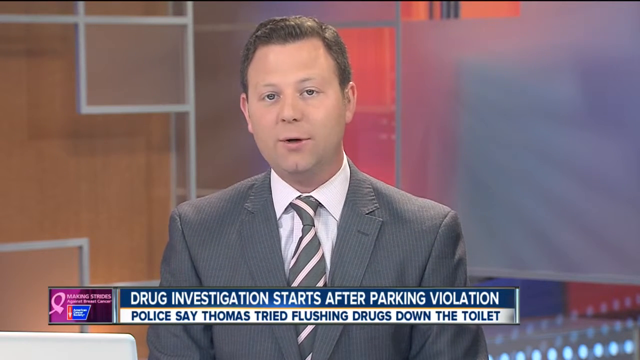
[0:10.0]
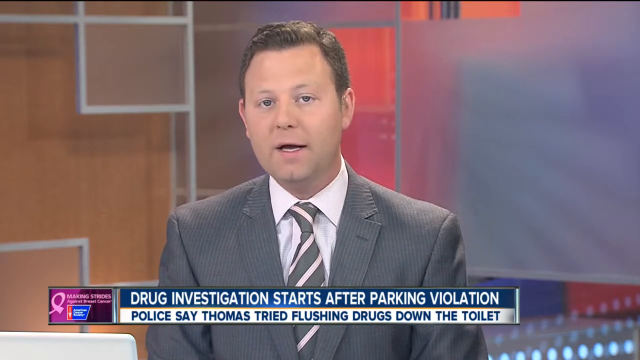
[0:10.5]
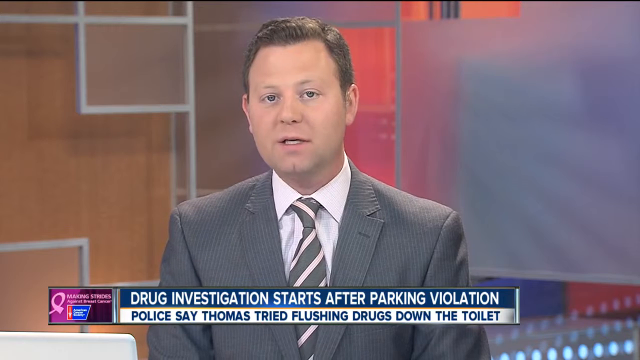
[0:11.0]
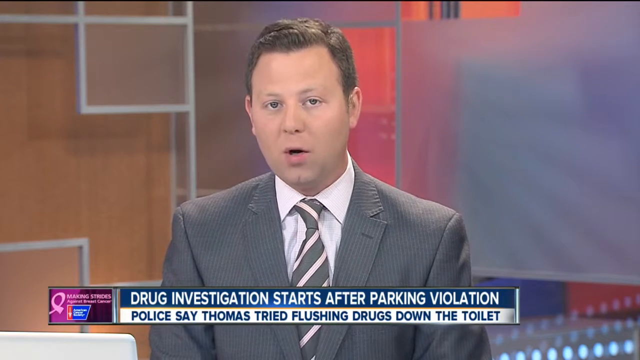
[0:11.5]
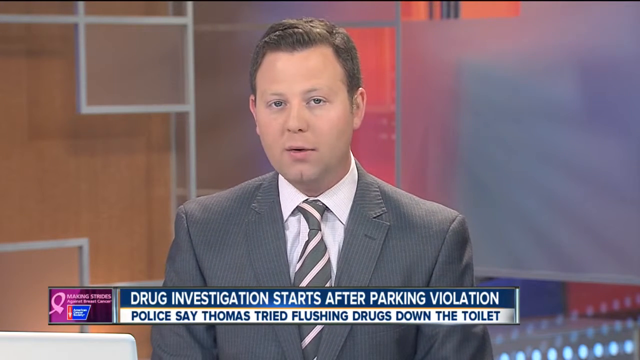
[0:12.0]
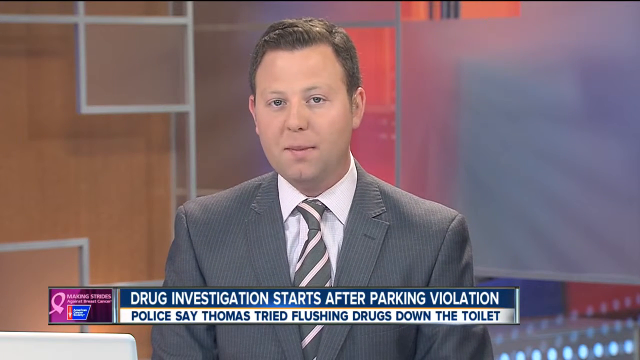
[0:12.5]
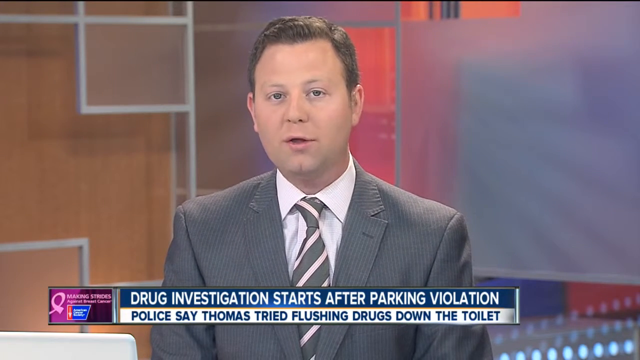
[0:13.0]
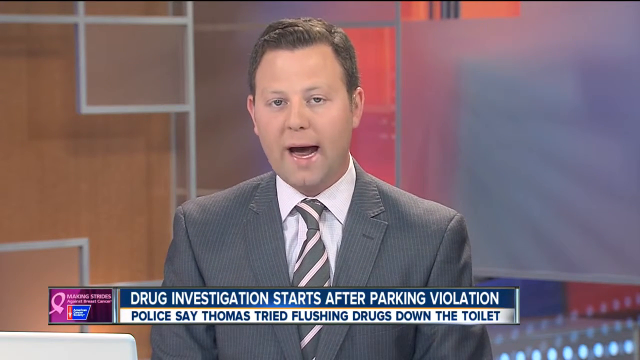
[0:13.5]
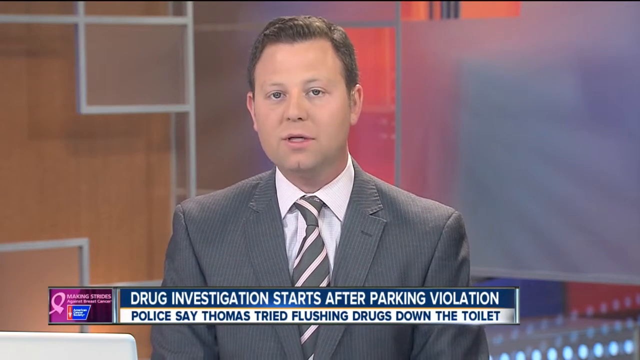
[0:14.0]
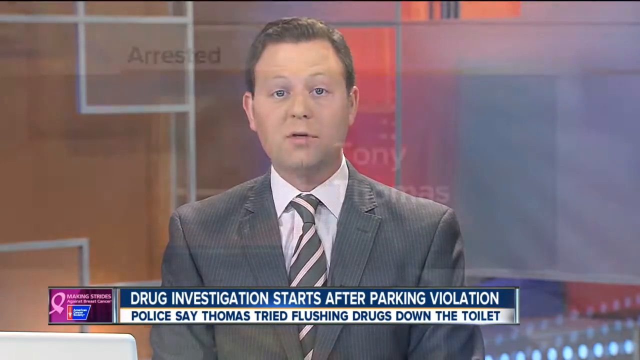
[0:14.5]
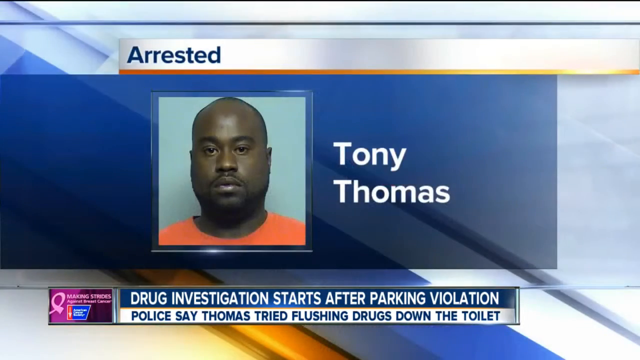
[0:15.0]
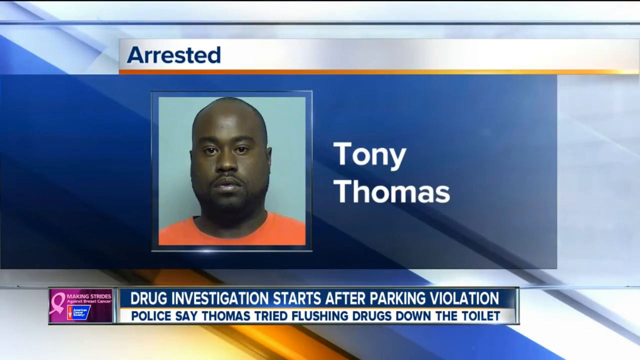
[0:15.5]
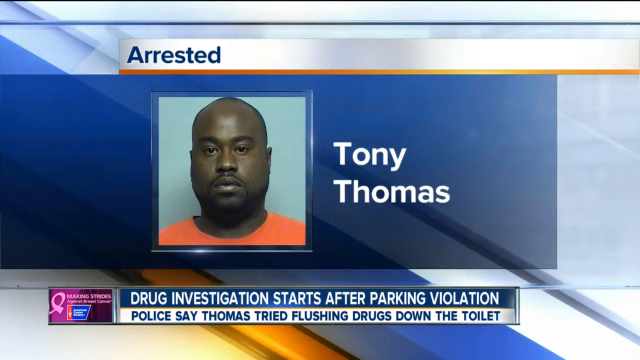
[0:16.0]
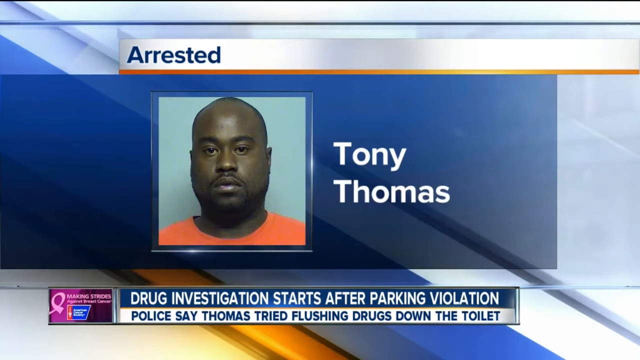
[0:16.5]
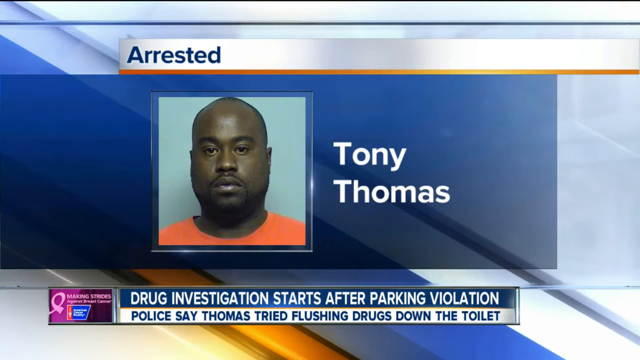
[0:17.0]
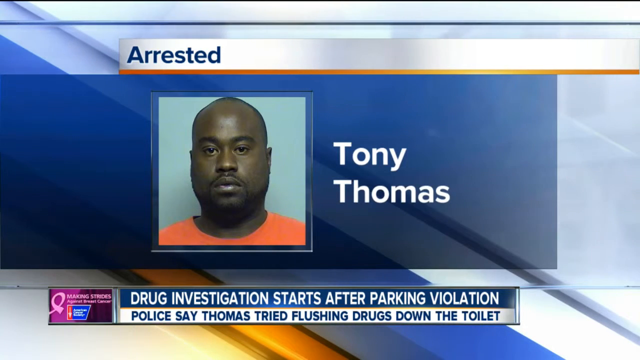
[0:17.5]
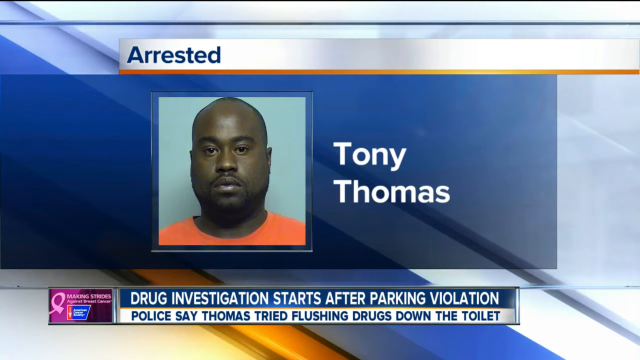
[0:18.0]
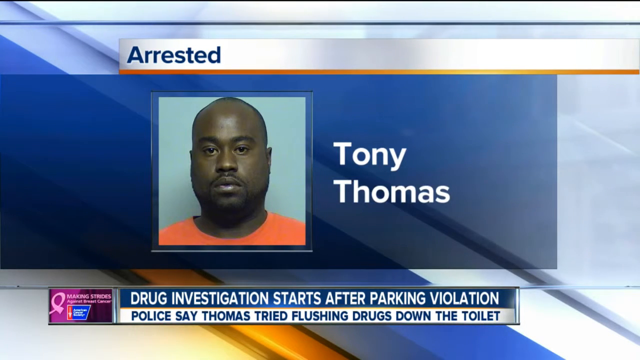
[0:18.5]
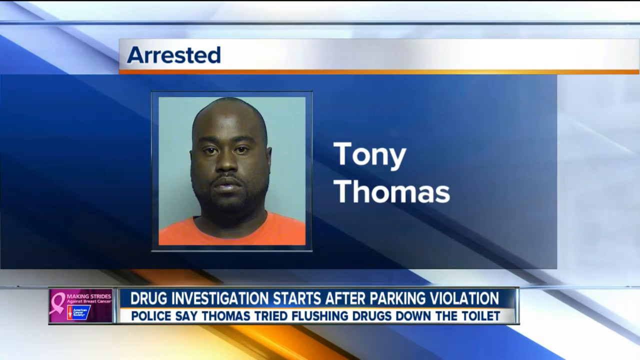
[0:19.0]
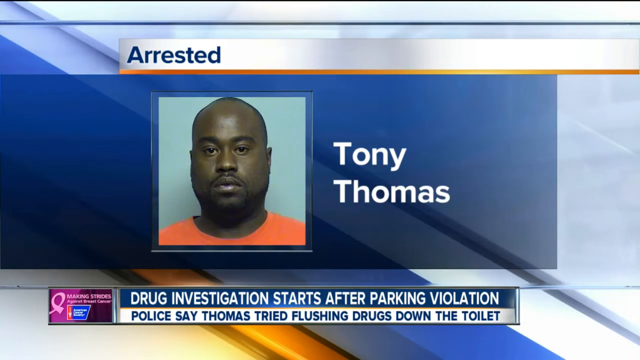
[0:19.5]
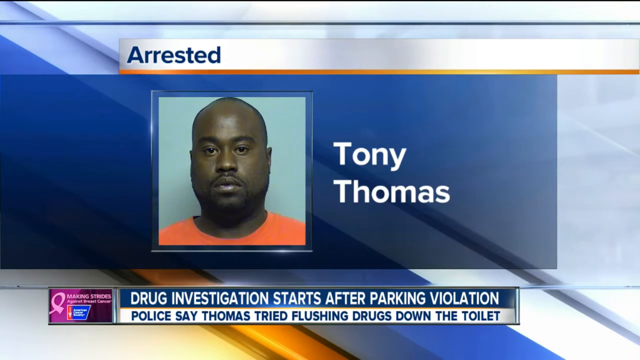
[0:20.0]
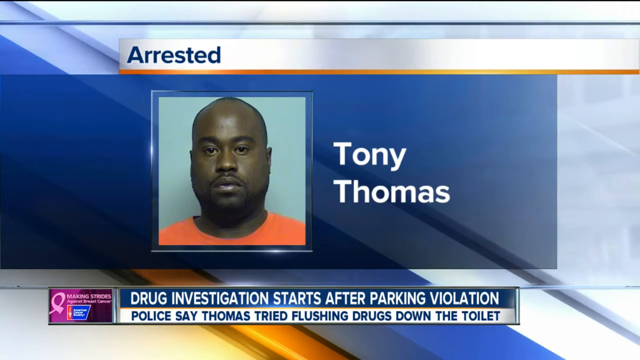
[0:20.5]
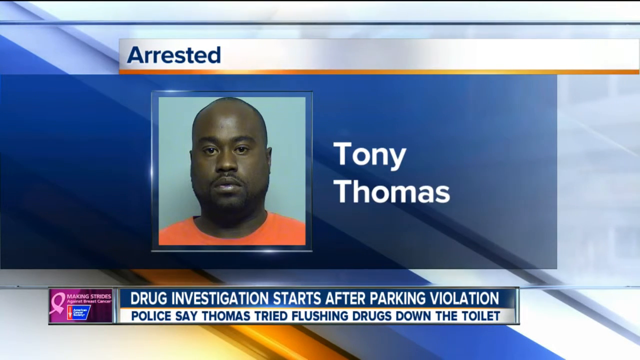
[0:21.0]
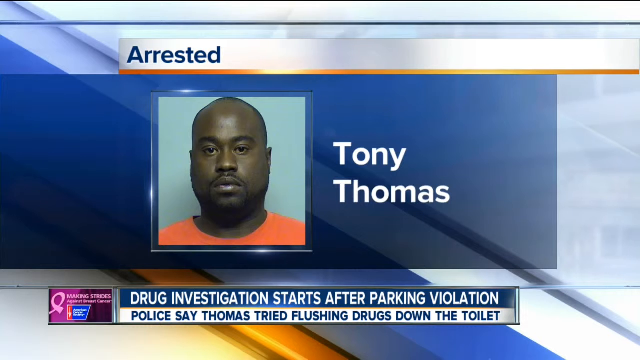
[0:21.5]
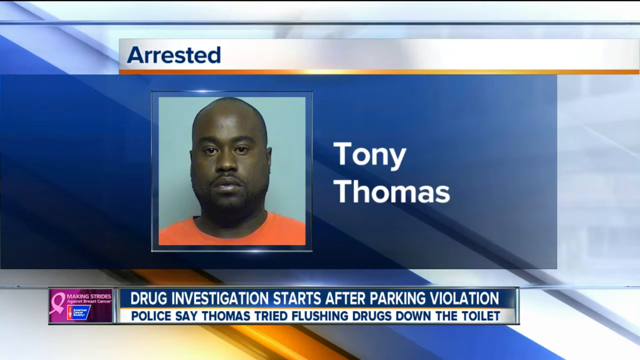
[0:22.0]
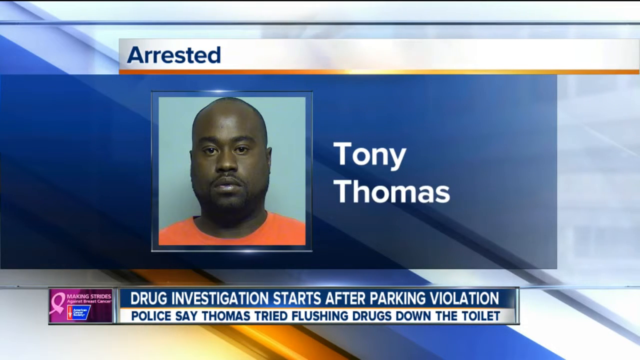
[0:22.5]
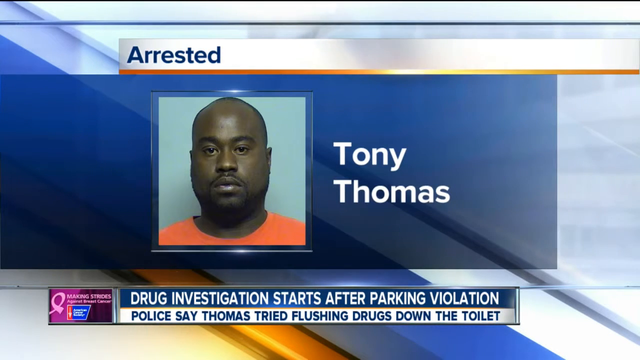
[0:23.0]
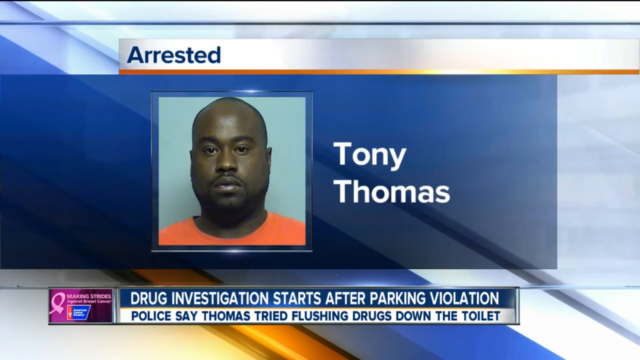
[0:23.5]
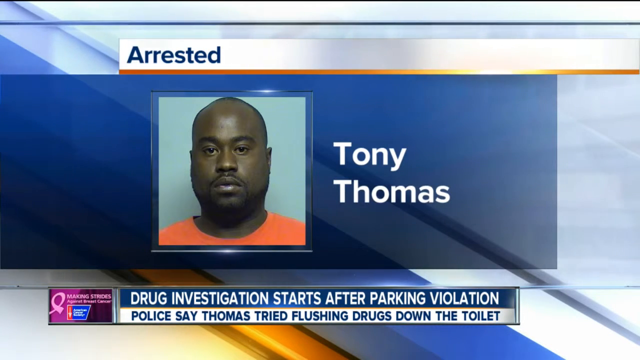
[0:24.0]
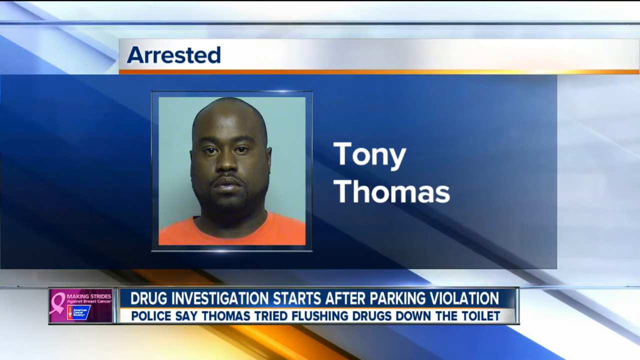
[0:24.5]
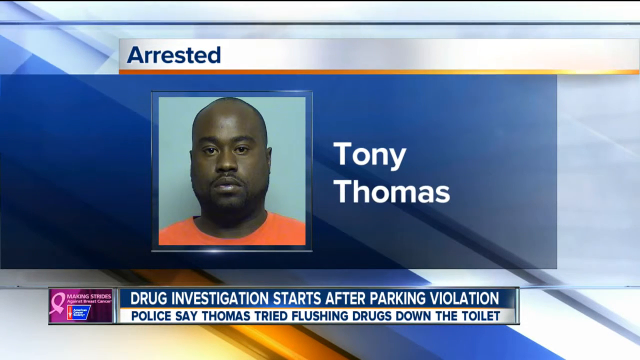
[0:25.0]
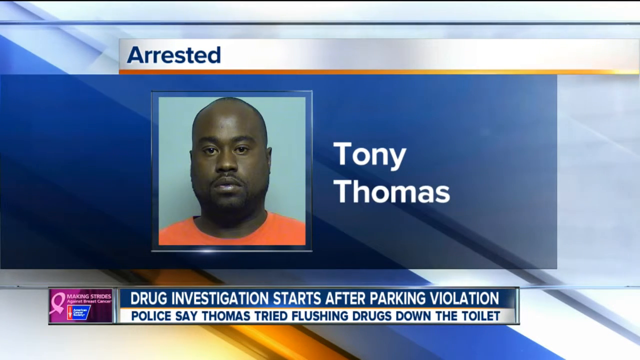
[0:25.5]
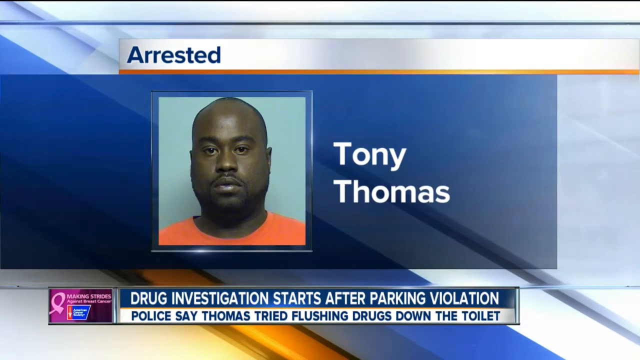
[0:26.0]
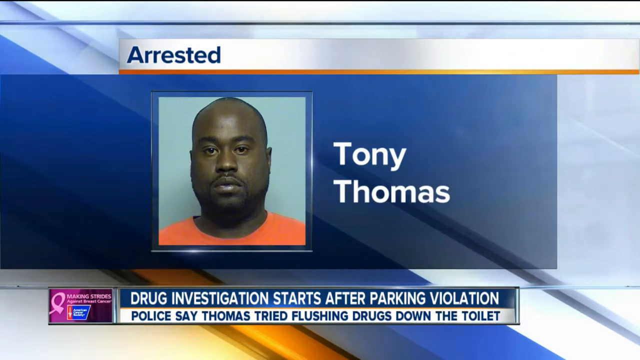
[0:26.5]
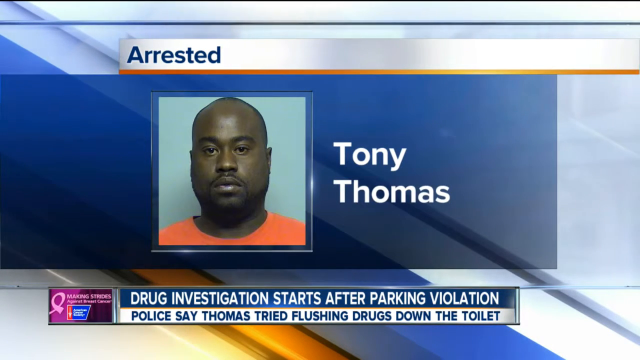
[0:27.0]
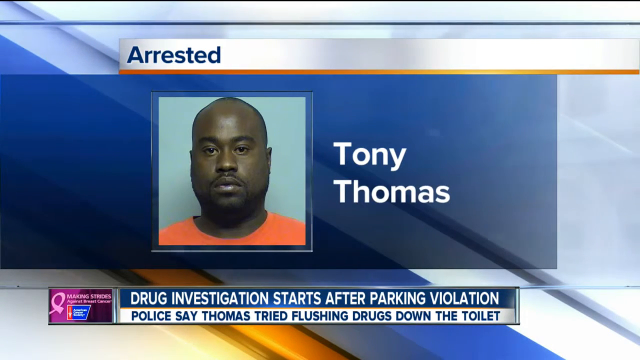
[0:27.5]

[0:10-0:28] The local news broadcast continues with the single host; there is no other host in the studio. He wears a gray suit with a white shirt and a gray striped tie, has brown hair, and is likely in his early 50s. The background is a typical local news studio background, and the bottom still reads "drug investigation starts after parking violation" and "Police say Thomas tried flushing drugs down the toilet." A picture of the suspect appears: the text "arrested" with a picture of a bald black man with a goatee, and text giving the suspect's name as "Tony Thomas." No other text changes and the screen does not change.